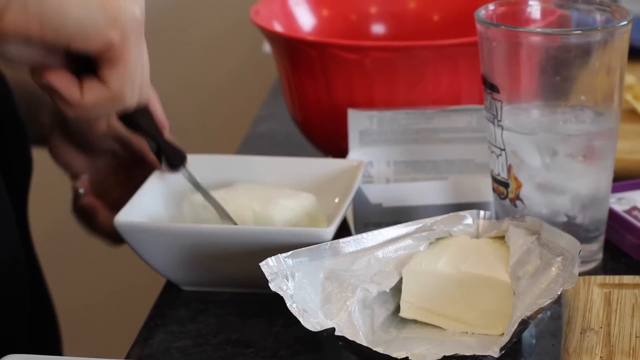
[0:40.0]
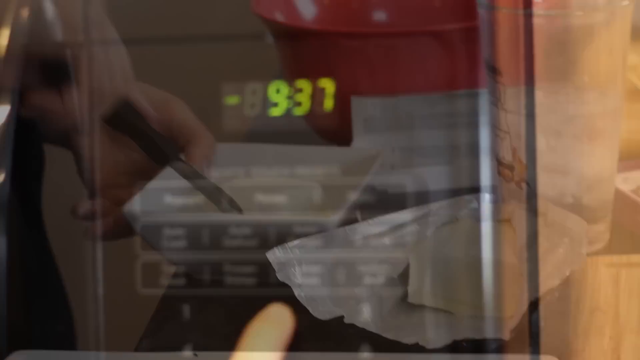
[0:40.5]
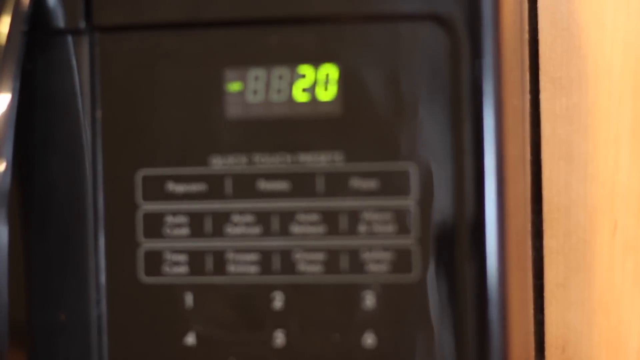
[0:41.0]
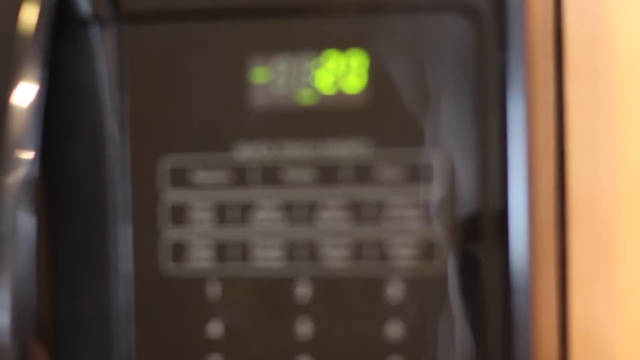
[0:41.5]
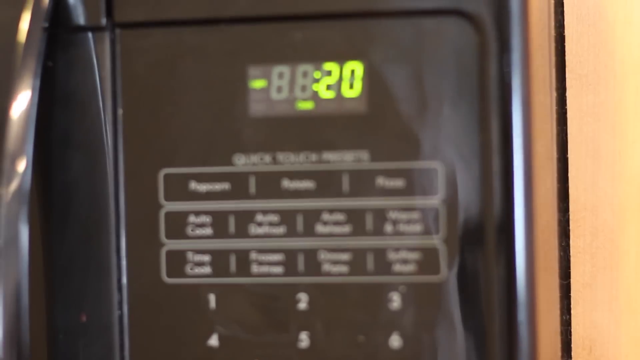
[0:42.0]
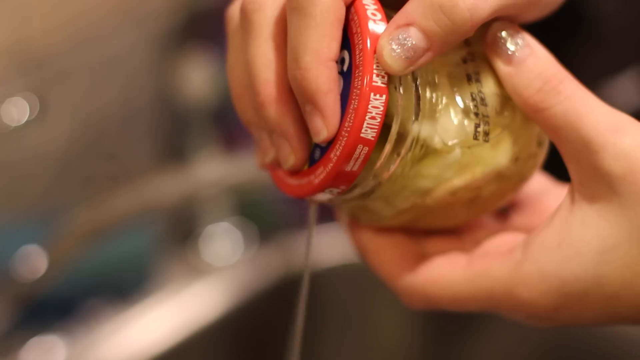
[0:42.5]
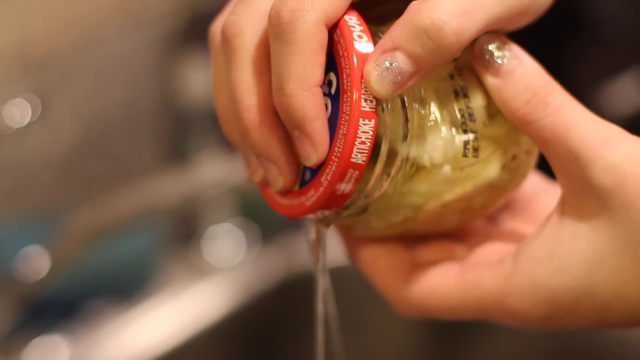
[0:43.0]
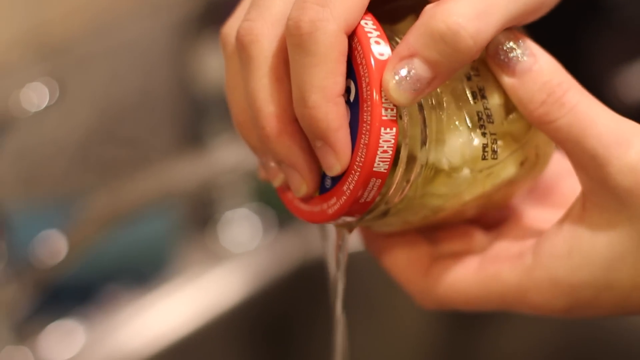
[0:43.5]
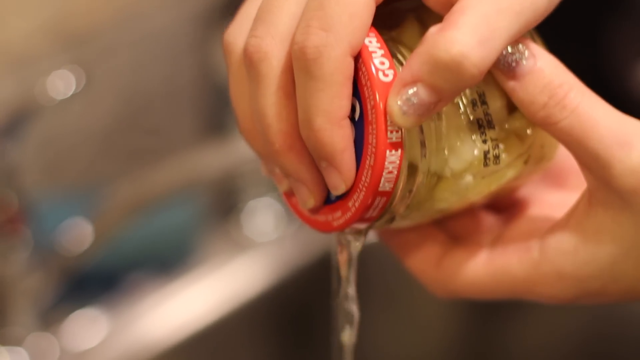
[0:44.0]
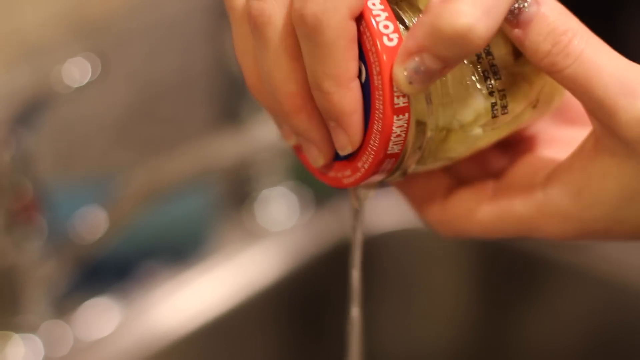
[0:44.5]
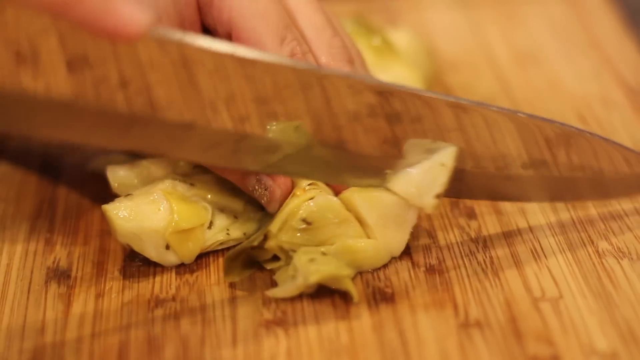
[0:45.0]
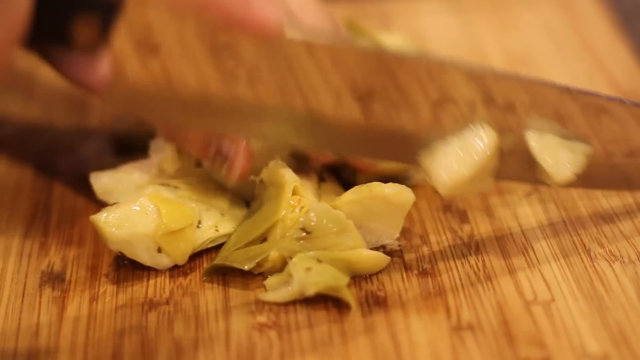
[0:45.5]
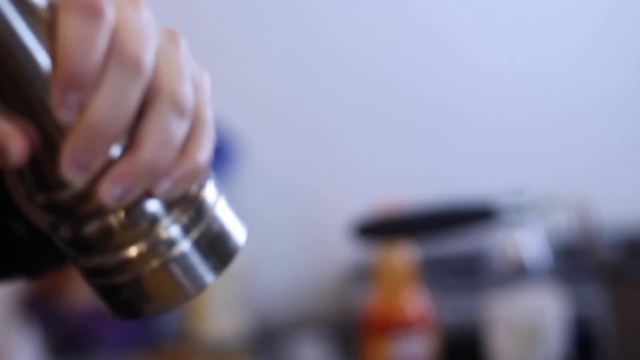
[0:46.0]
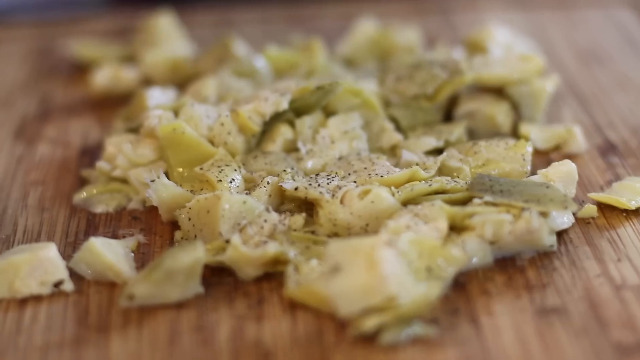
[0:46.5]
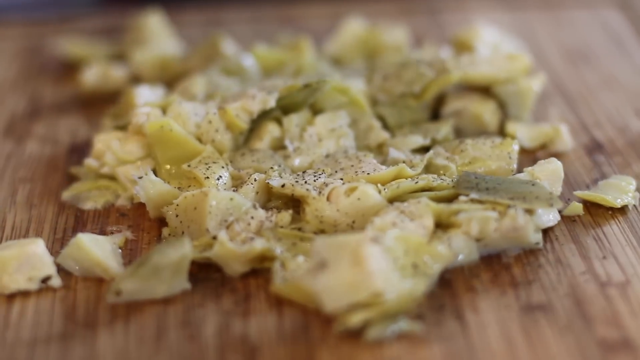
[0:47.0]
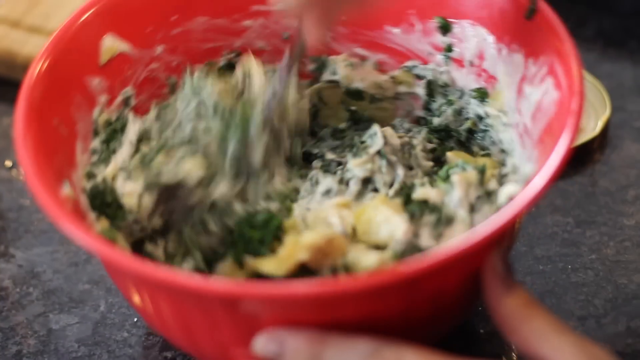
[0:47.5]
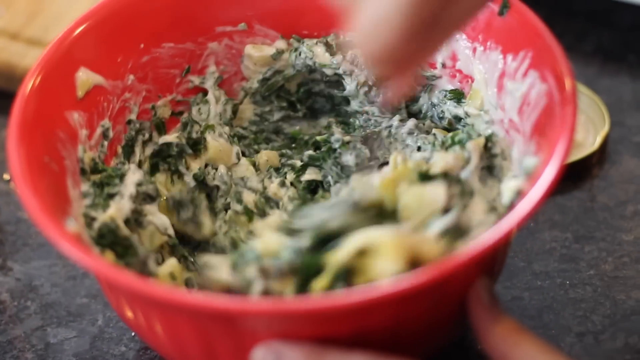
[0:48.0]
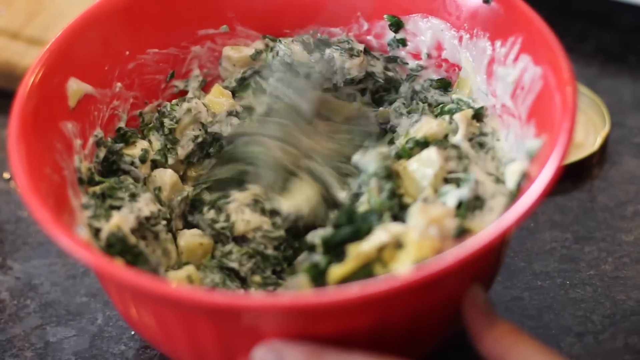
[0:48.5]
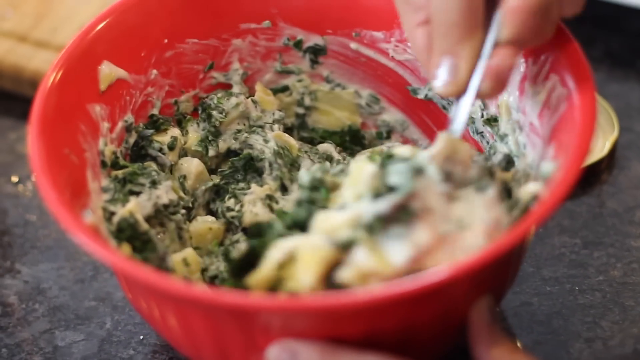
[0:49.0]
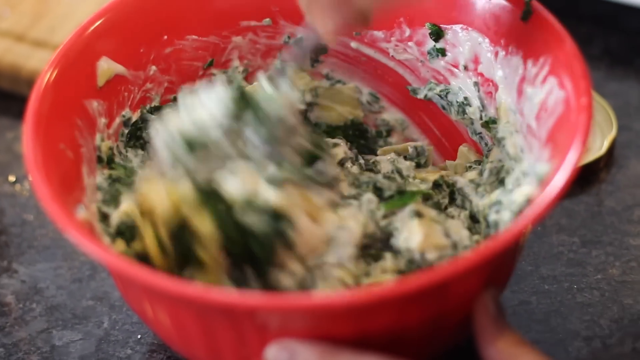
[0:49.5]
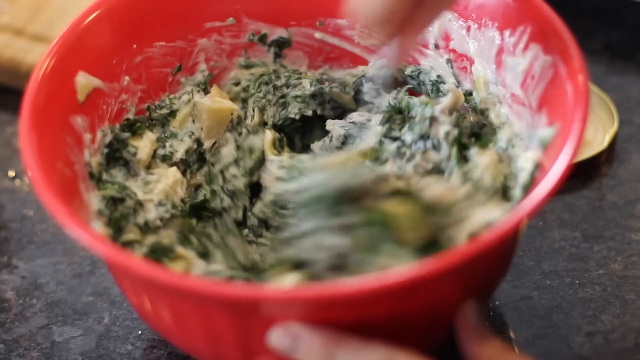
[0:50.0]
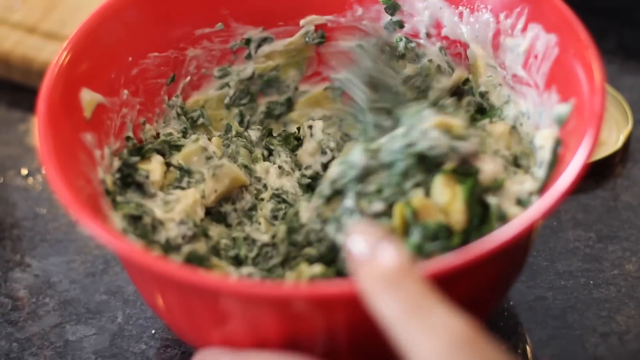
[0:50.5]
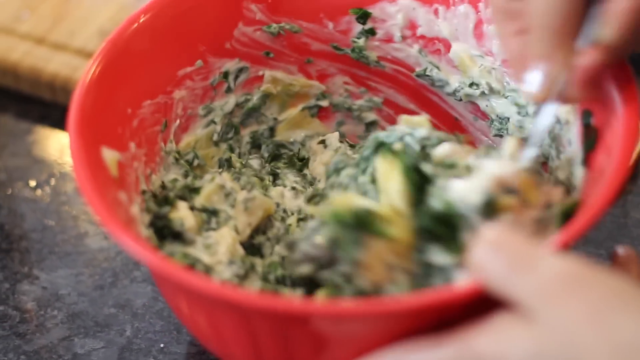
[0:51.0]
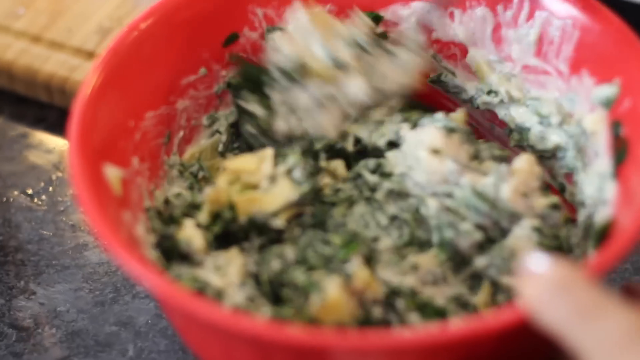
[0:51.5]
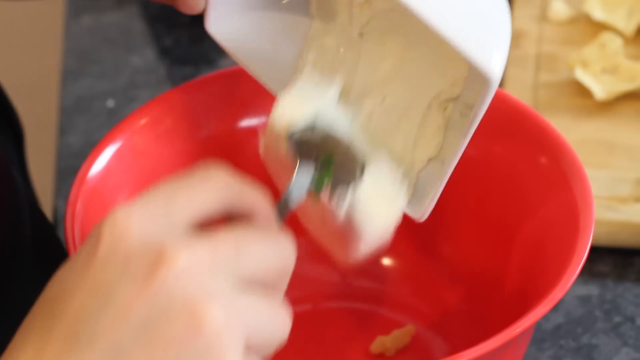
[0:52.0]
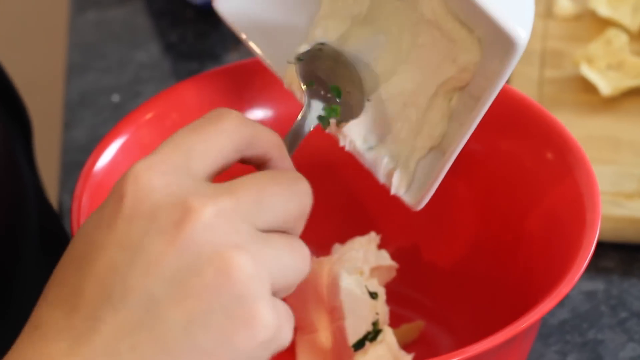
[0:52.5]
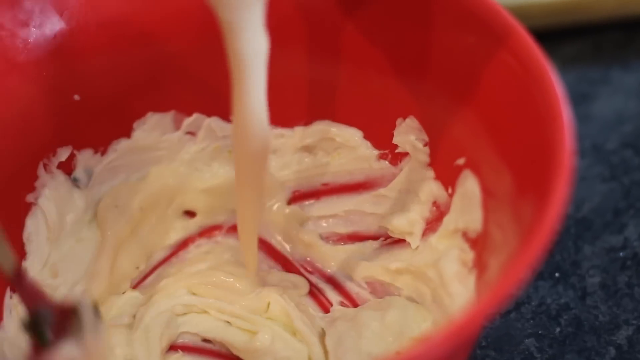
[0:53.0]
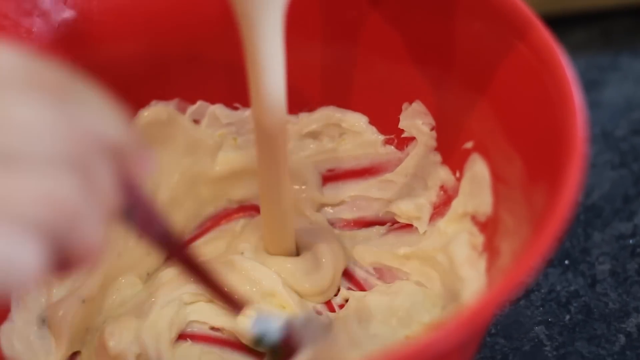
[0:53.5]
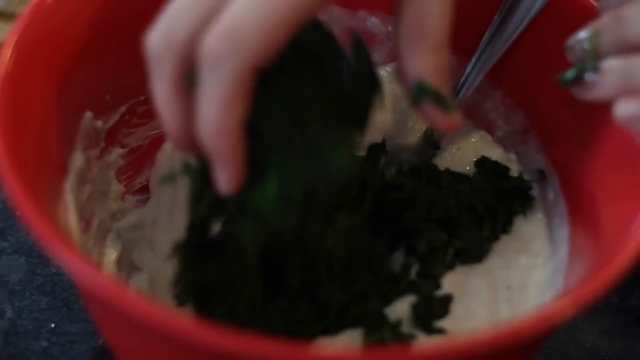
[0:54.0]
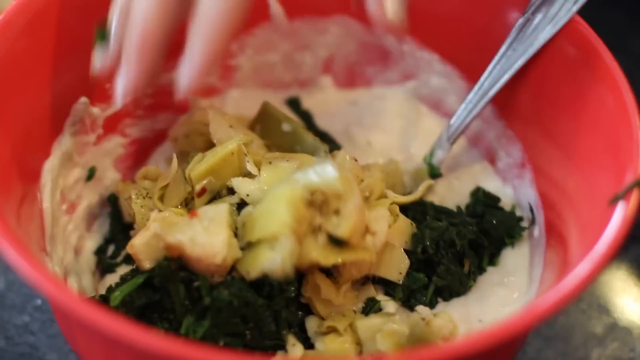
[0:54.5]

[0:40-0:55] A comment is shown, and the food is prepared. The microwave is set to 20 seconds, and things are chopped up and mixed. The spinach appears to be mixed in a red bowl as everything is poured into the red bowl. The hand is white, so the person appears to be Caucasian. The kitchen is nice, with proper kitchen utensils, and the knife looks like a professional knife. The camera shot is focused on the food being prepared.